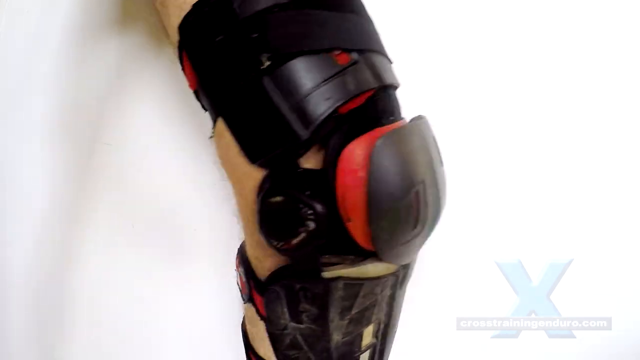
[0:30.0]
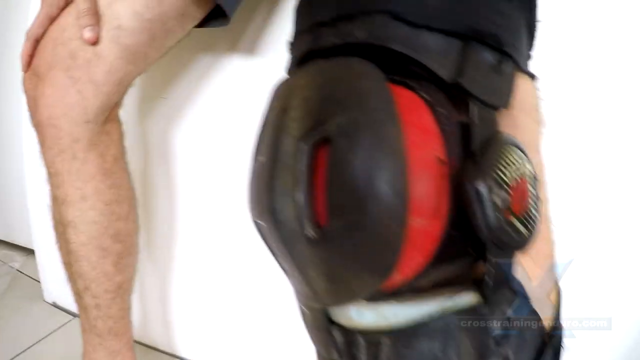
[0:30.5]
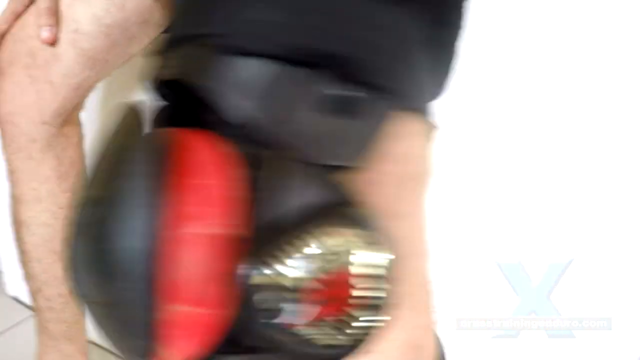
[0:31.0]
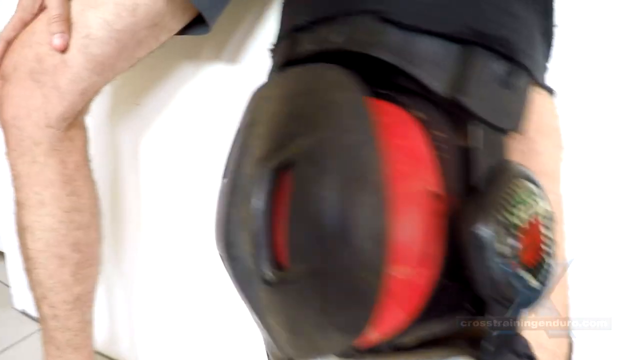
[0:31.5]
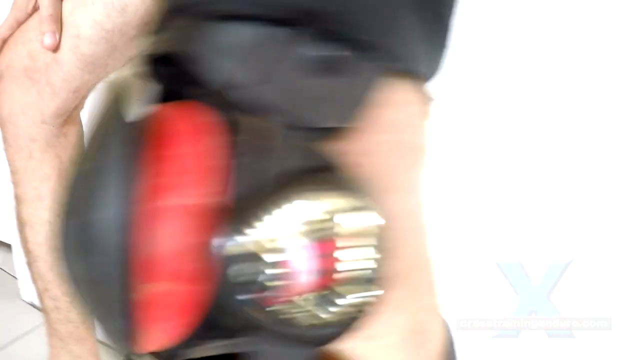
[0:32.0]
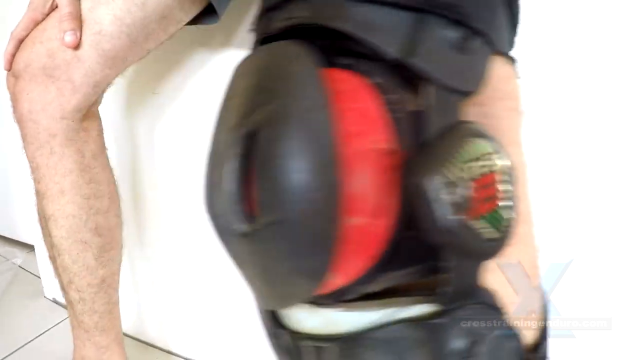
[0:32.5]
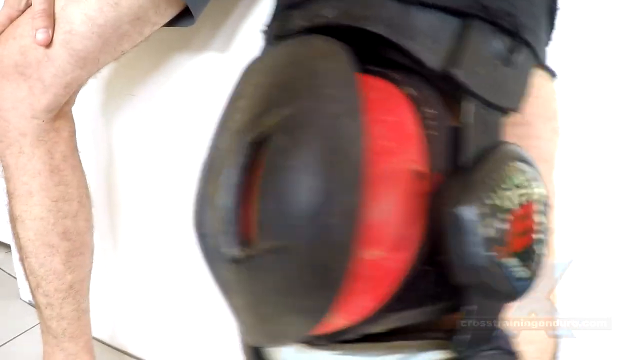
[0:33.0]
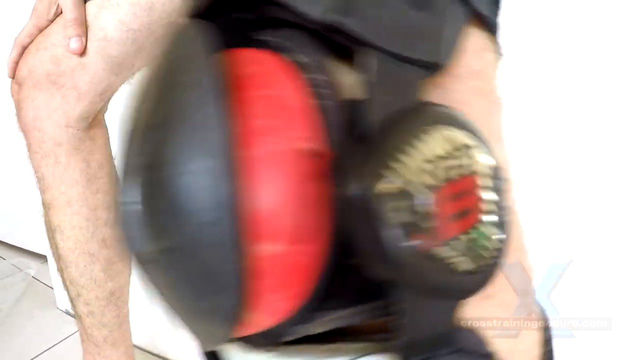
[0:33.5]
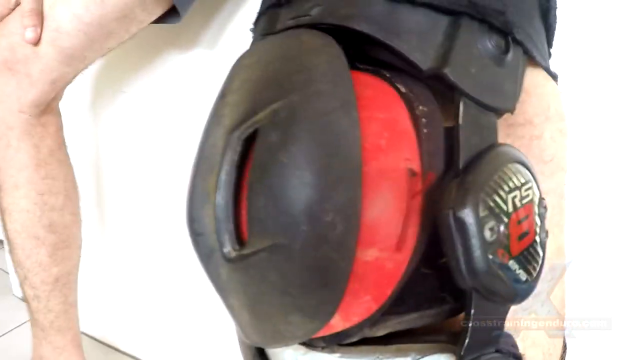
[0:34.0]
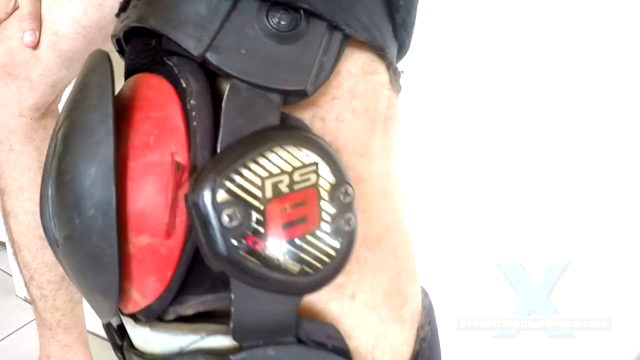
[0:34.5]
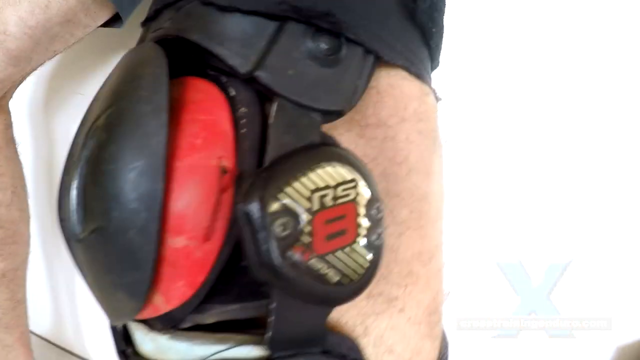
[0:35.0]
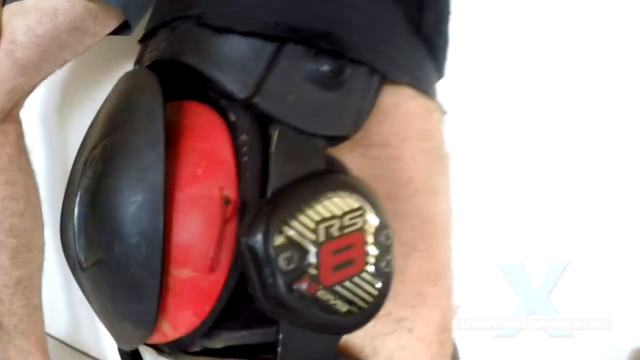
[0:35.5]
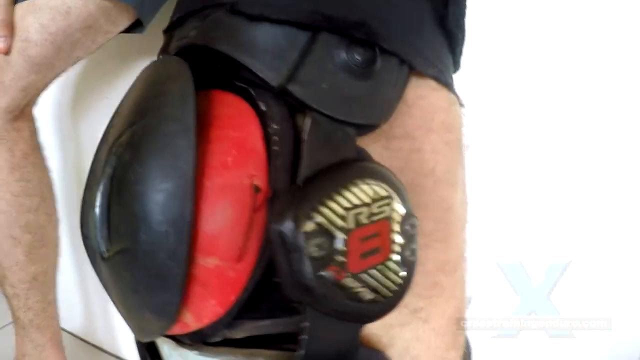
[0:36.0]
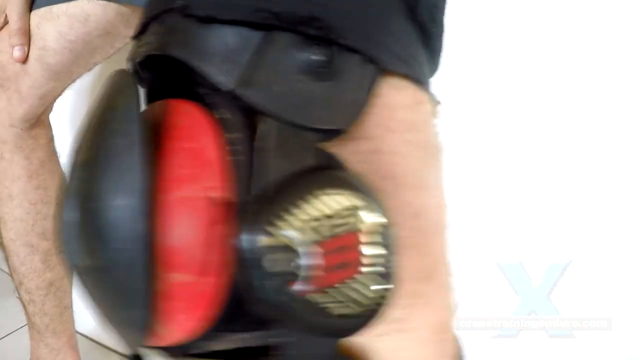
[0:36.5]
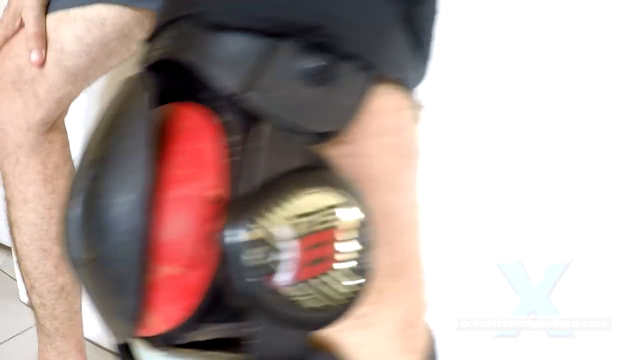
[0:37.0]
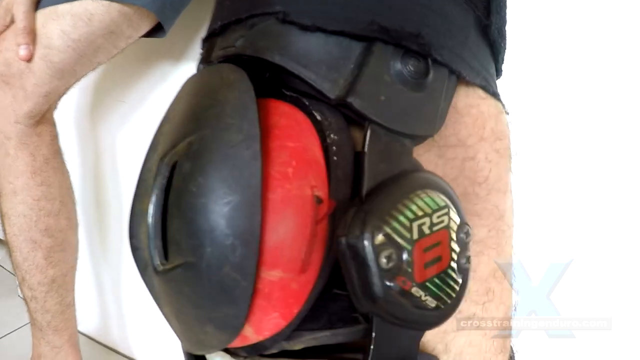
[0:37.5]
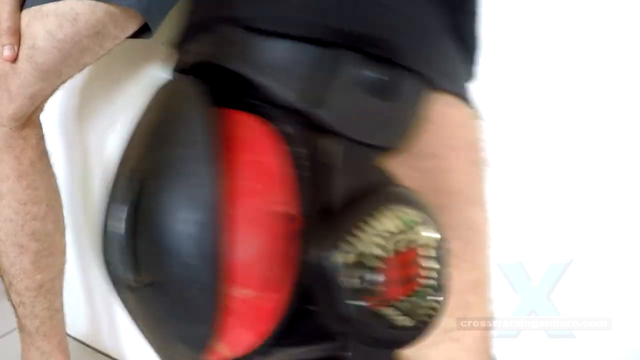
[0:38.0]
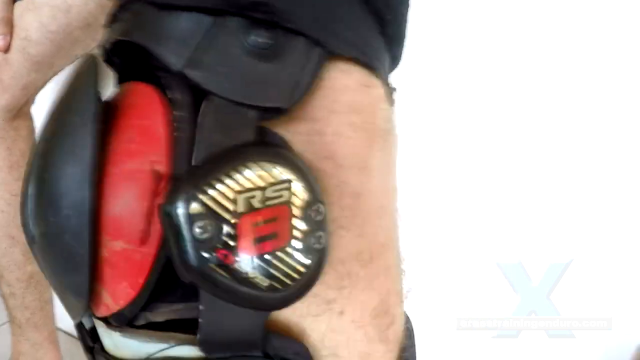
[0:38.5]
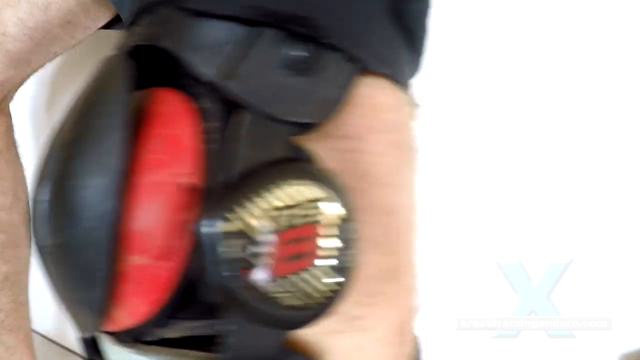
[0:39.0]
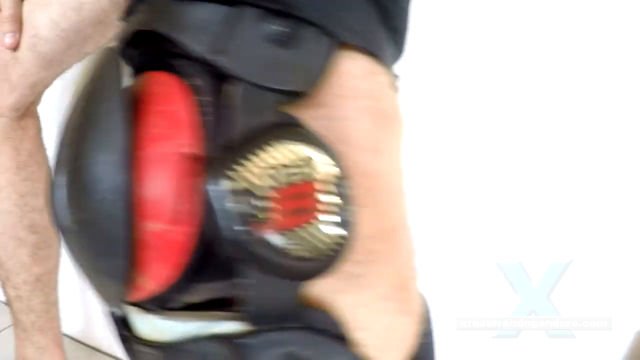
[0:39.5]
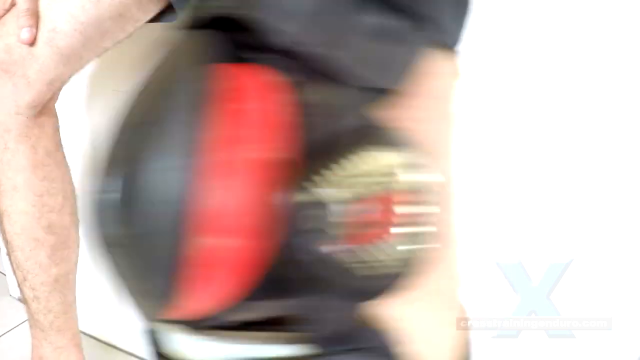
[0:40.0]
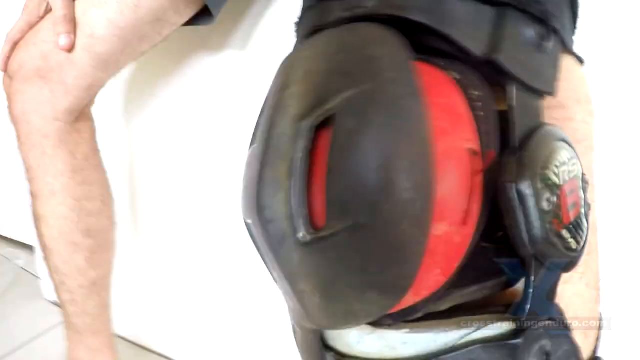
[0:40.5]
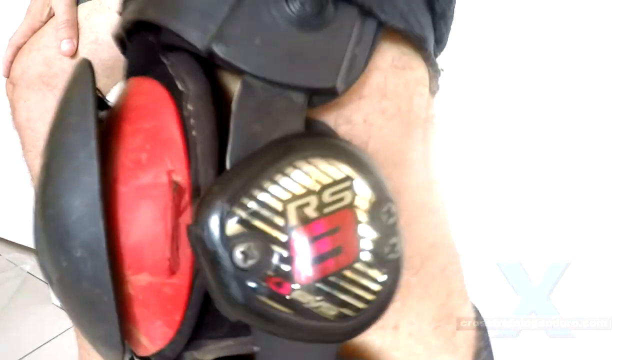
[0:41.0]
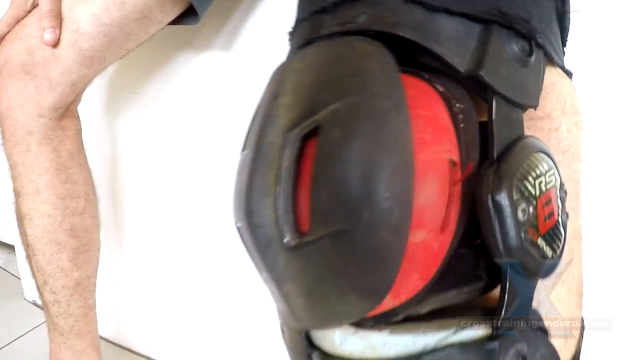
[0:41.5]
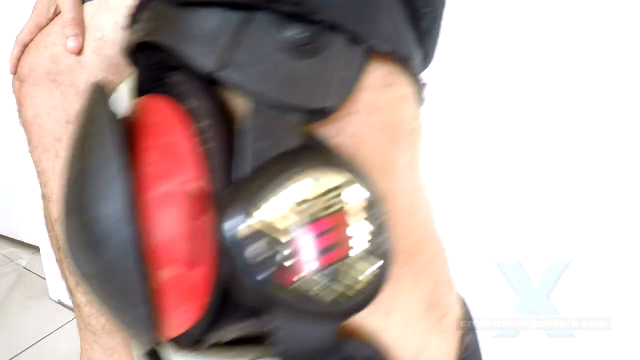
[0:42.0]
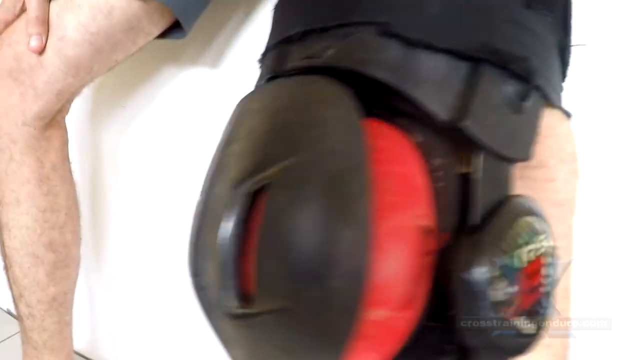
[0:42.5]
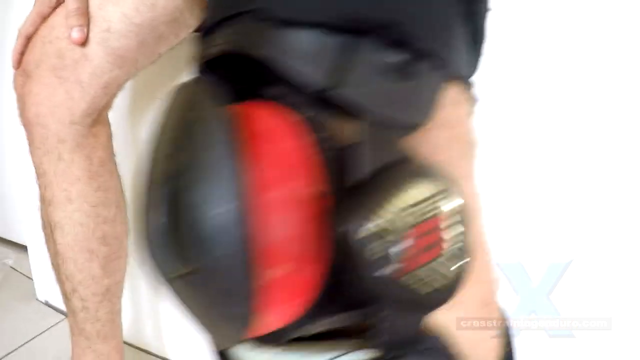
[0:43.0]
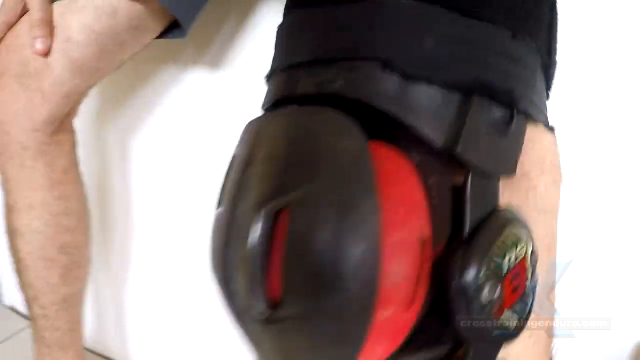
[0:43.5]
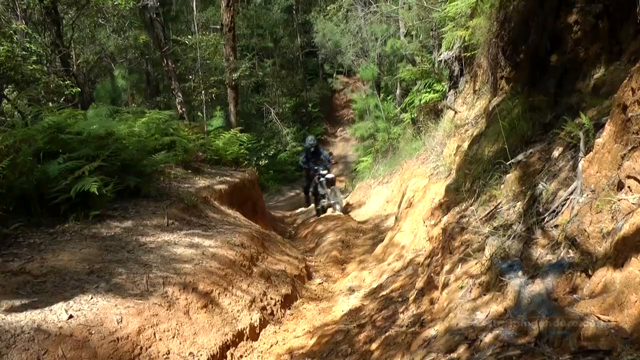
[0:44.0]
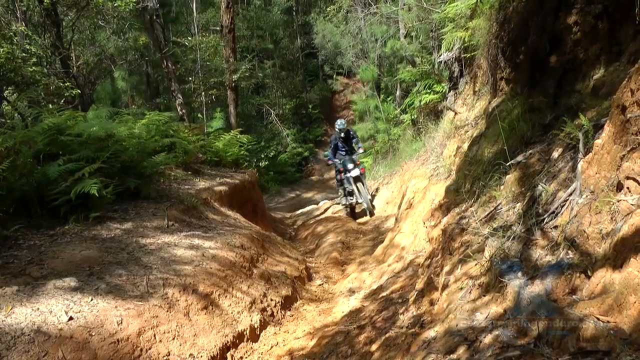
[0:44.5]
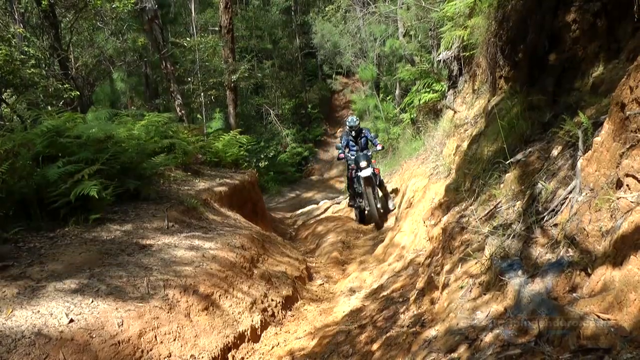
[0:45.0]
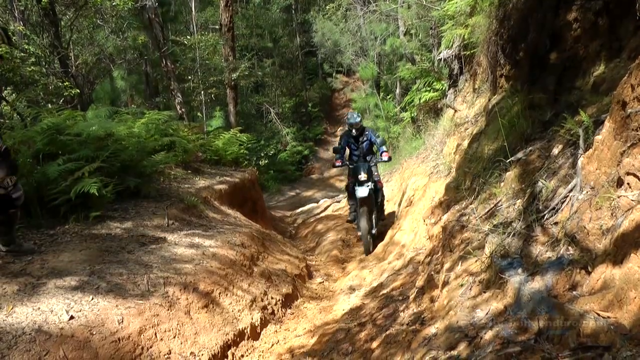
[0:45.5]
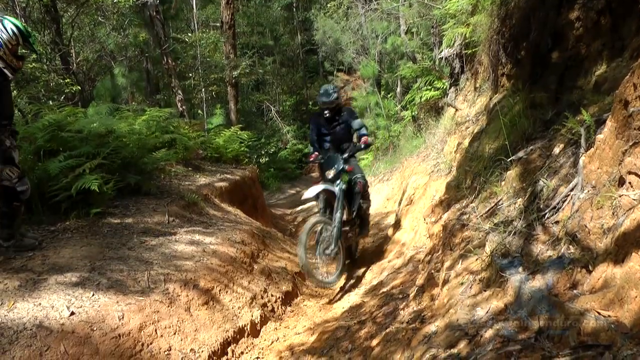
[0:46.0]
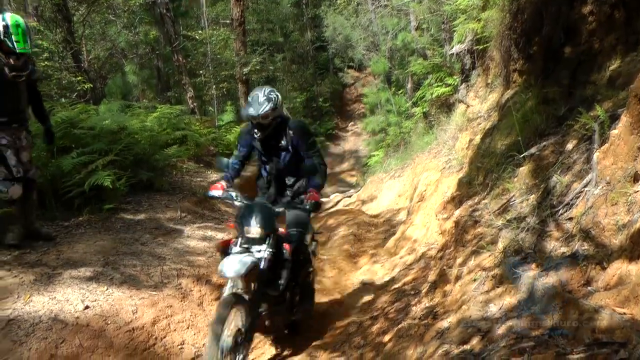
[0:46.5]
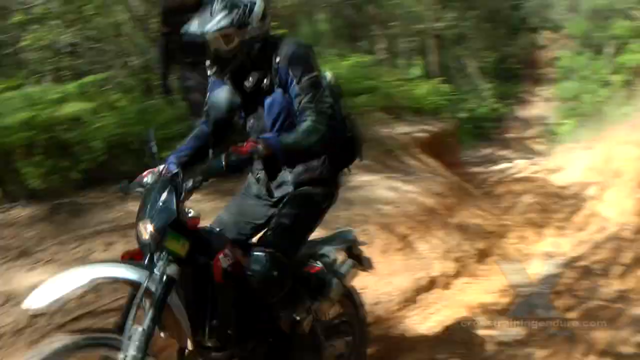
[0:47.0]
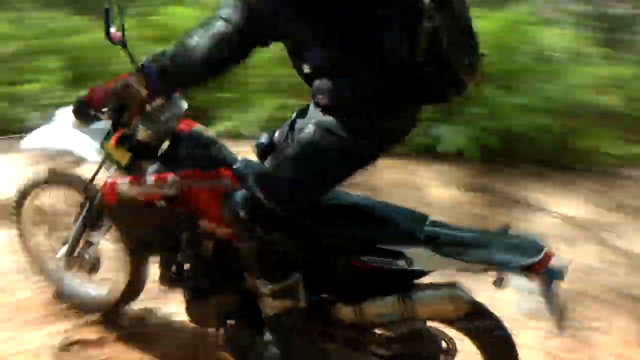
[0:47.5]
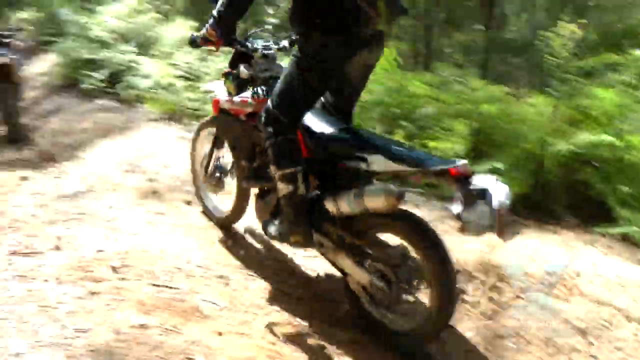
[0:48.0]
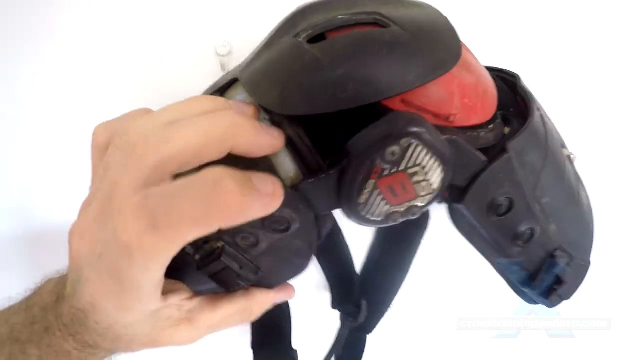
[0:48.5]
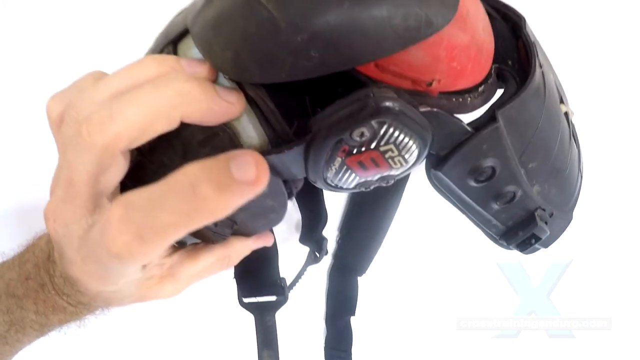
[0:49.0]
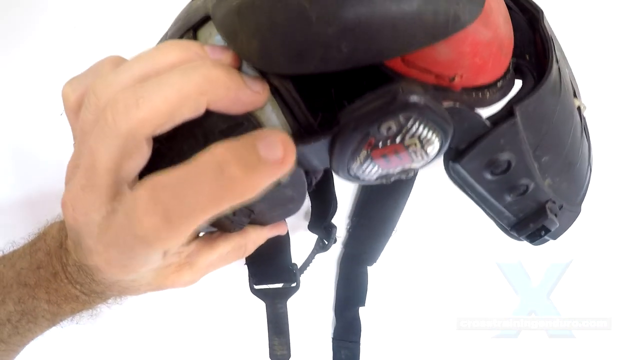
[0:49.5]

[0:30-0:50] A person with a white complexion is wearing EVS knee braces, which are black with red underneath. On the left-hand side of the knee brace, "RS" is written in white next to a big number "8" in red. There are white stripes with small writing, and the brace is black all over. The person shakes his left leg front, back and forward to show how the knee brace moves. Next, a person rides a bicycle on an uneven, dusty trail with sand all over it, with grass and trees in the background. He wears a helmet, and another person stands next to him. Then an individual with a white complexion holds the black knee braces in his left hand.